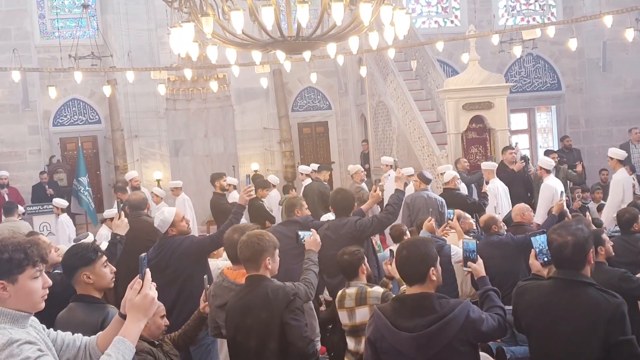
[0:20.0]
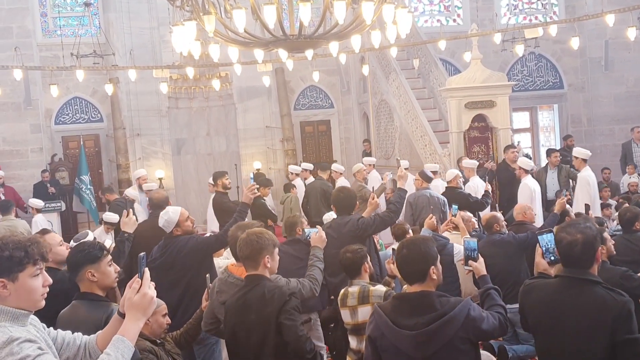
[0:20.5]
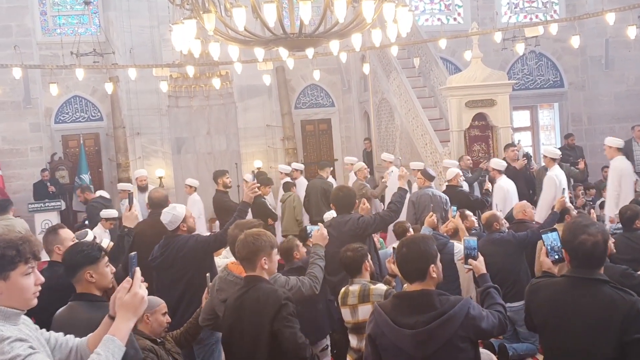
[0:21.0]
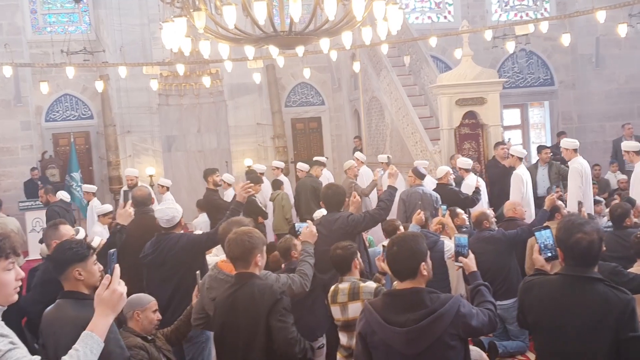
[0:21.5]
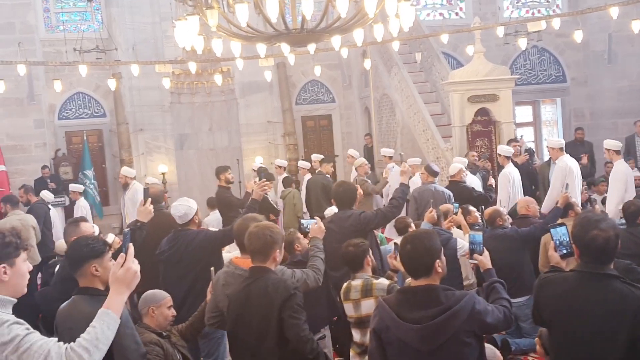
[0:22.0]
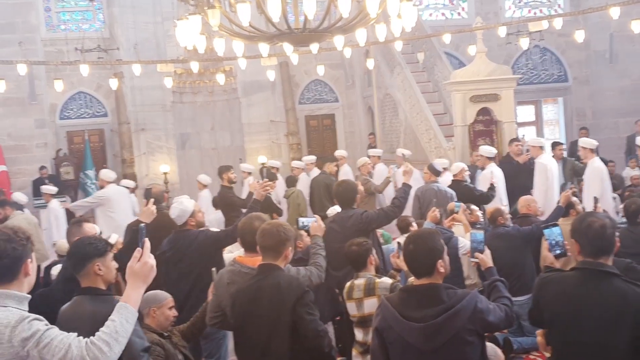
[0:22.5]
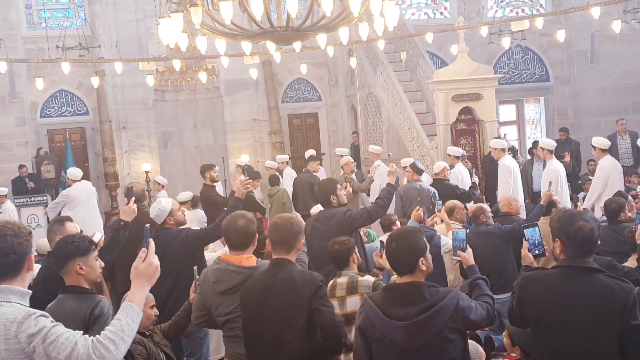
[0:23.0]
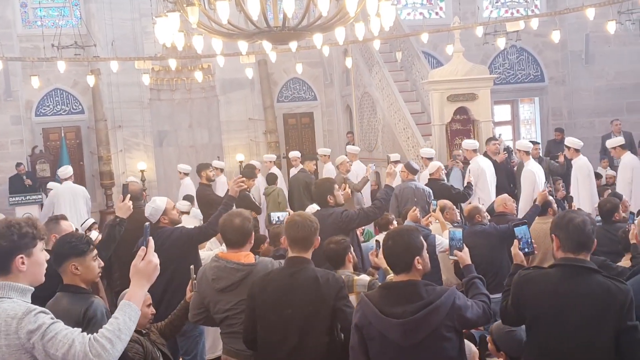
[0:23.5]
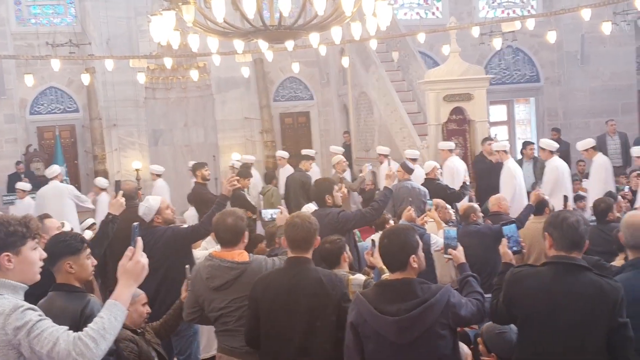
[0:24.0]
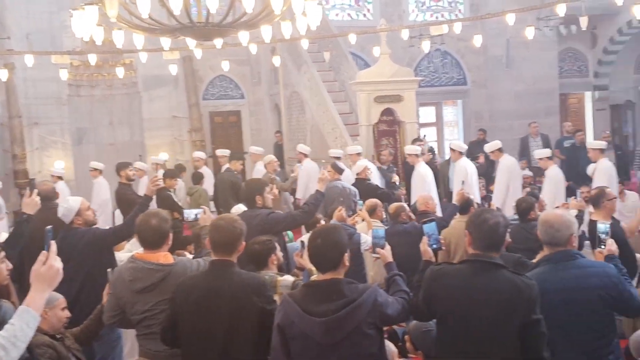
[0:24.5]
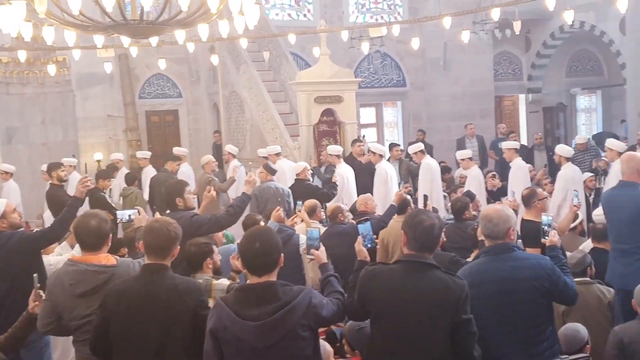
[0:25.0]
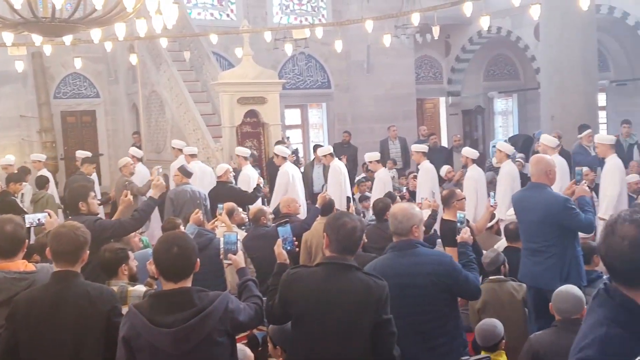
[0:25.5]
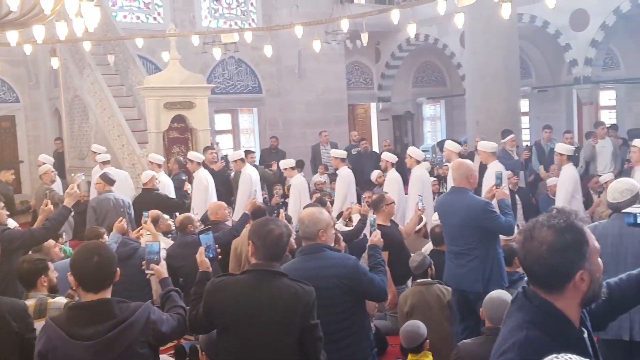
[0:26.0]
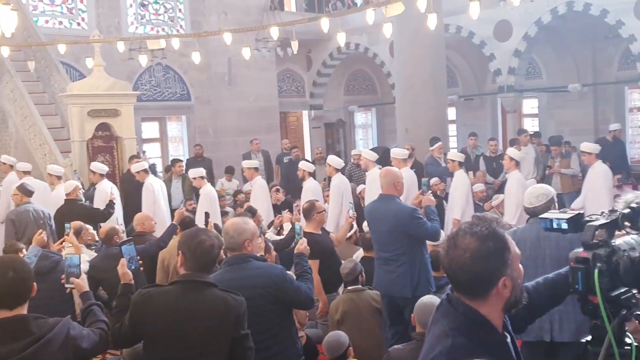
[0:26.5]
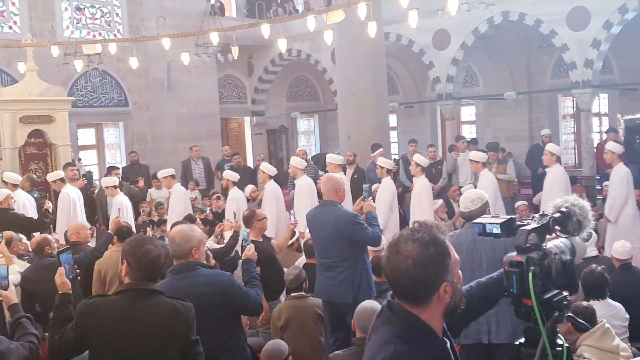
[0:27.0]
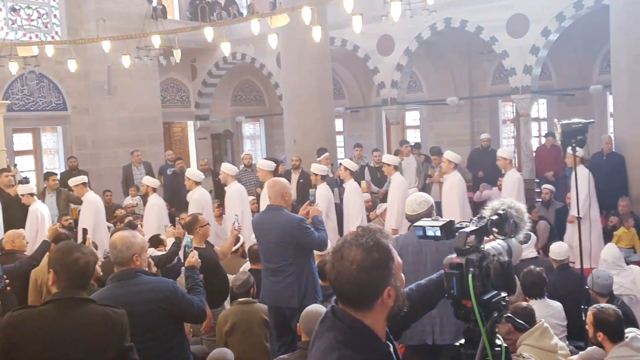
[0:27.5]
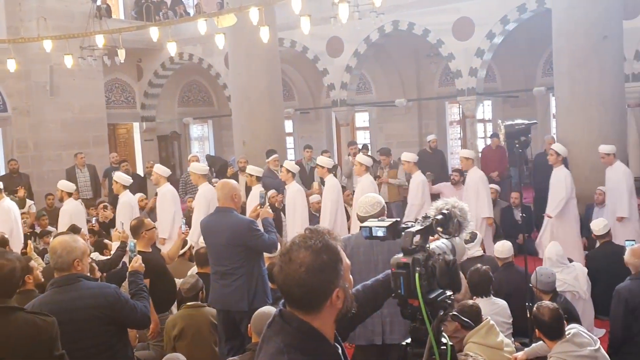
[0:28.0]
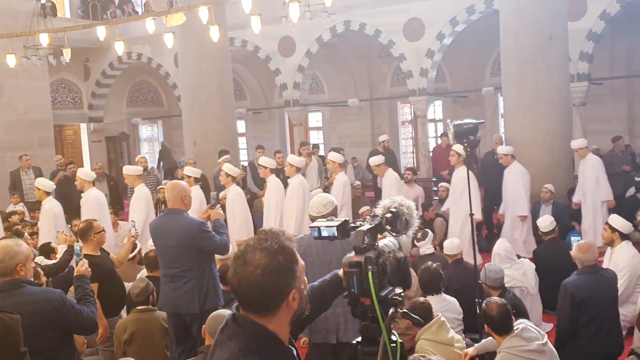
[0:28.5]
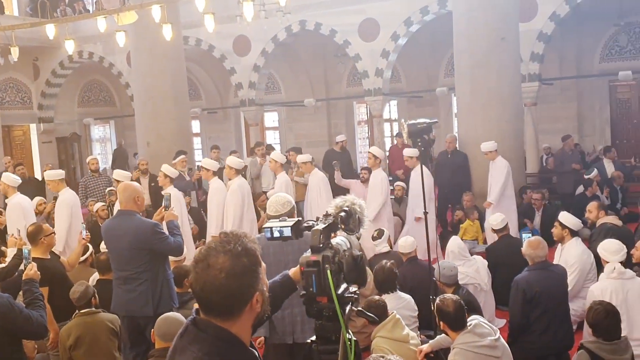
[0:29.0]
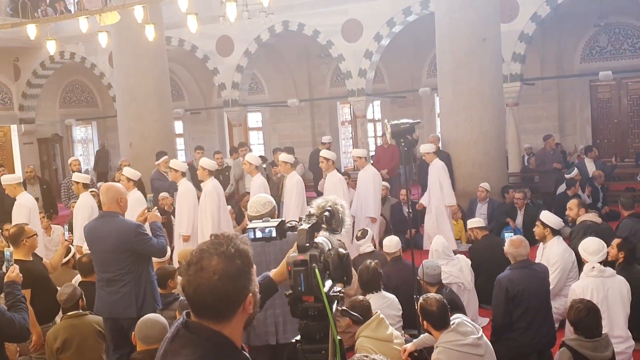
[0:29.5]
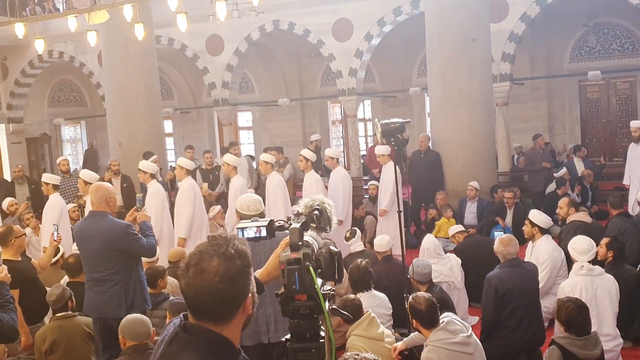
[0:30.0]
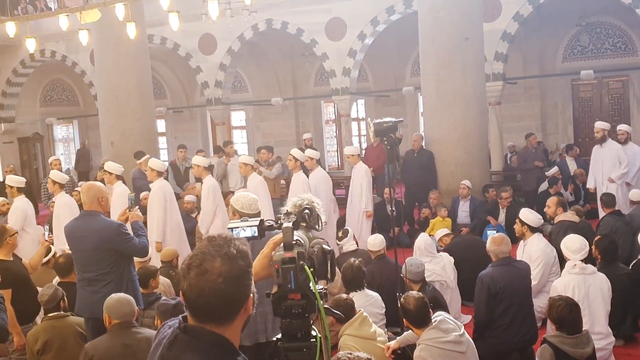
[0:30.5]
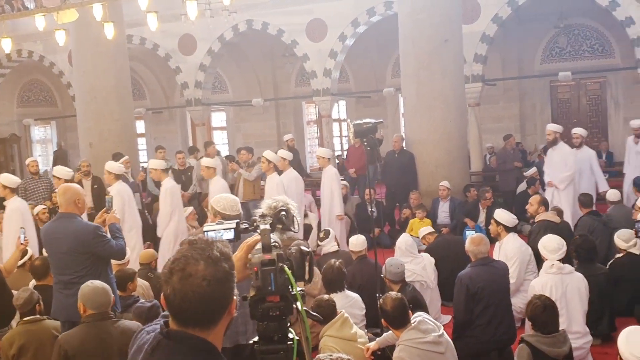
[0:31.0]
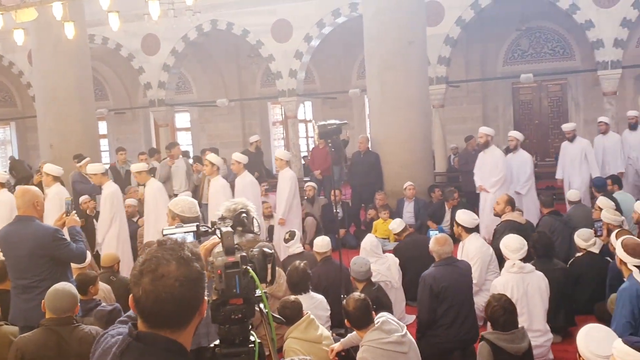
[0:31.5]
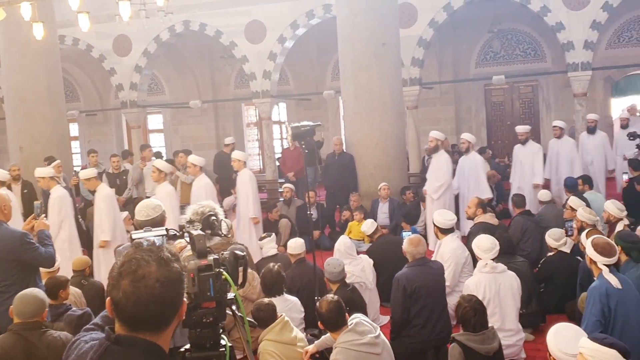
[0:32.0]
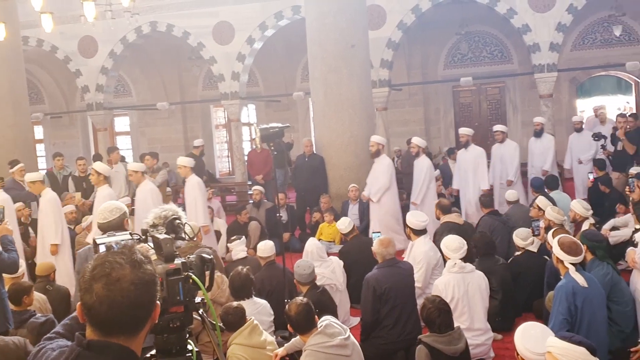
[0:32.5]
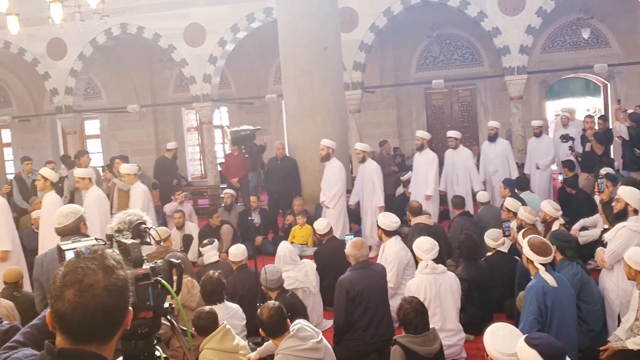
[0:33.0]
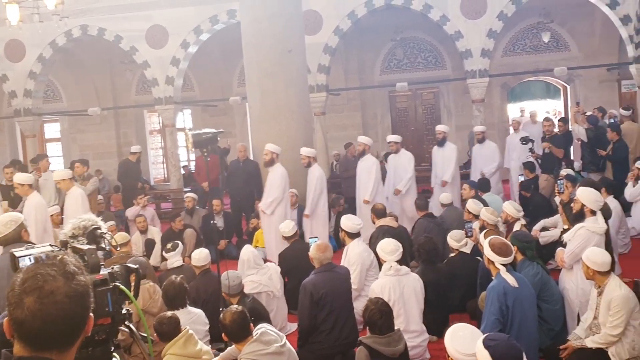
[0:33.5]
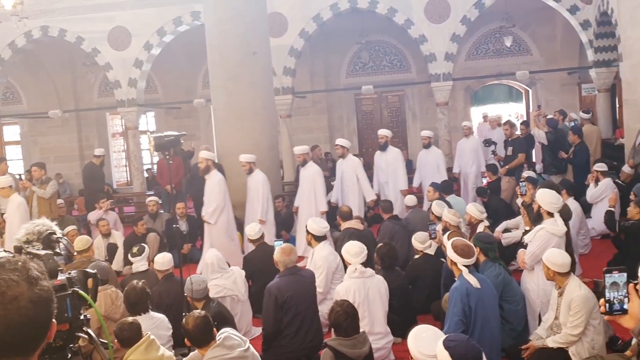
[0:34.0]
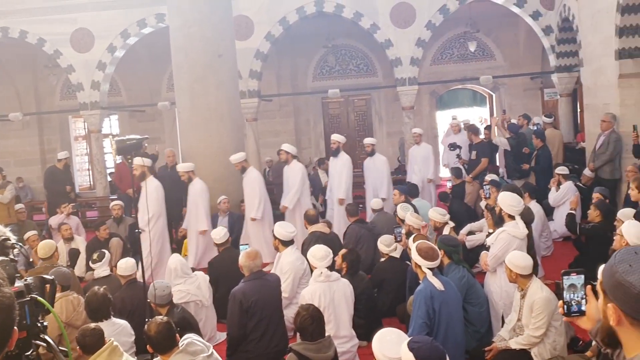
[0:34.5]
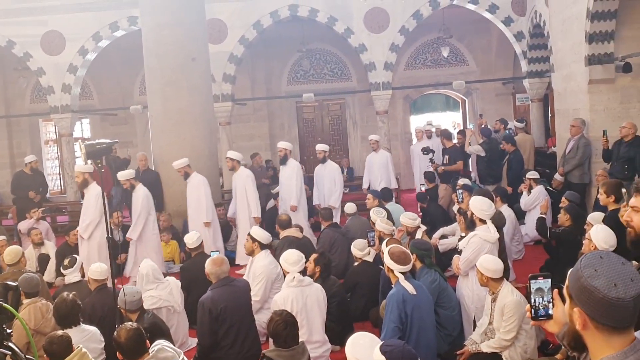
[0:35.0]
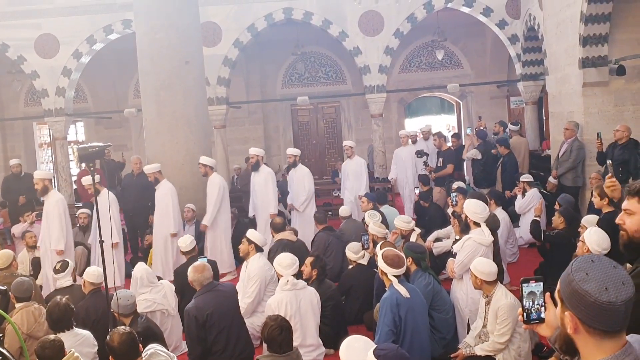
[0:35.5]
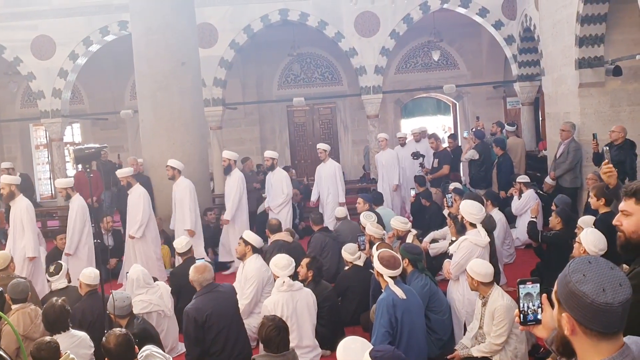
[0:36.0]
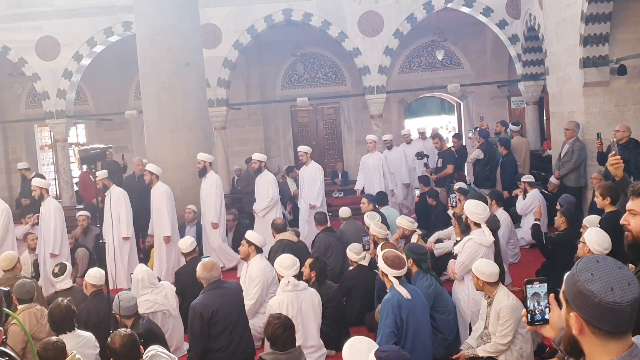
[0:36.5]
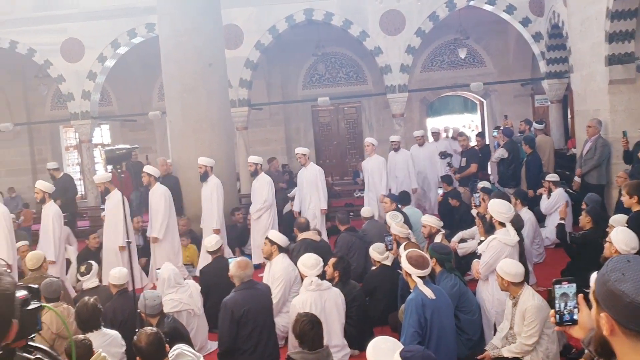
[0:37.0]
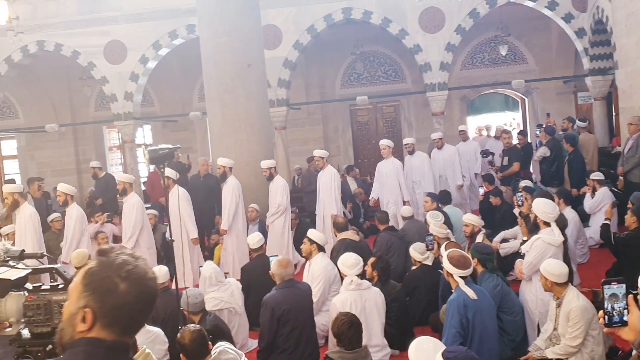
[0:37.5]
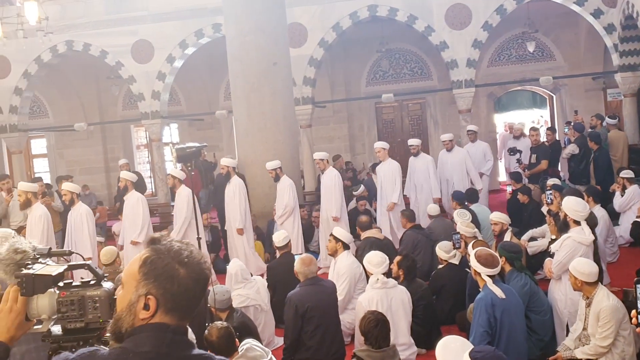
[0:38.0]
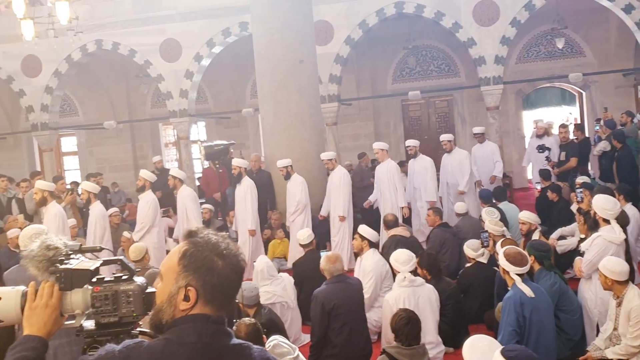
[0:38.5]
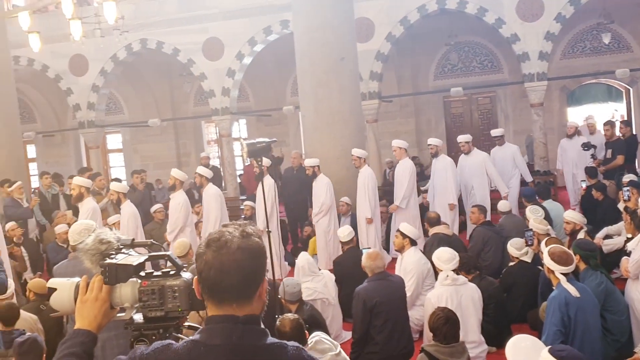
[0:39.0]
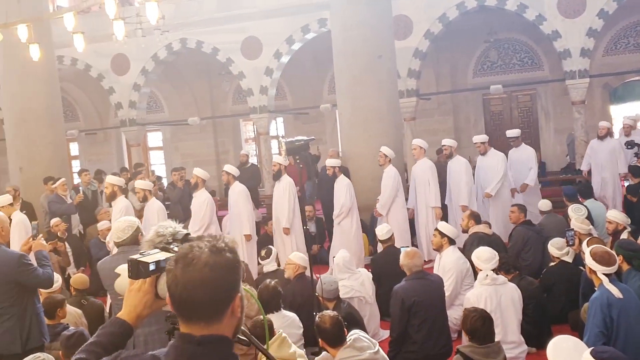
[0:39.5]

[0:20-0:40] Many young men proceed in a procession into a religious area that looks somewhat like a church with different arches. The beginning of the line is young men, and as the line continues the men are older, with mustaches and beards. Most of the people have darker hair and darker mustaches and beards. In the background, spectators hold up their cameras, either video recording or snapping pictures of the event. There is quite a bit of lighting in the background, with lots of lights at the ceiling, including a very large chandelier in the upper left-hand corner of the frame. Many people in the audience also wear white hats, similar to the men and boys parading in. A staircase on the right goes higher, and there are lots of very decorative arches in the background.